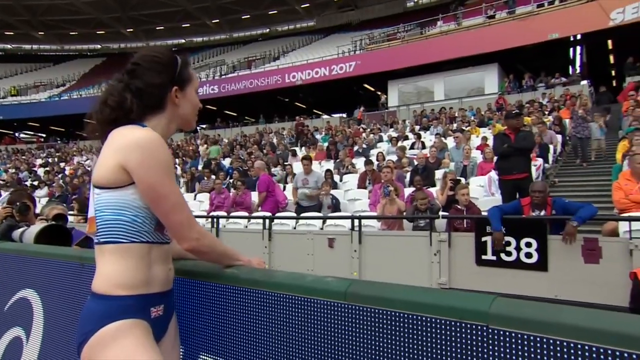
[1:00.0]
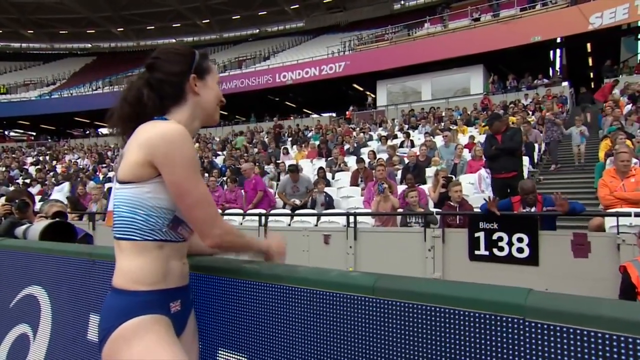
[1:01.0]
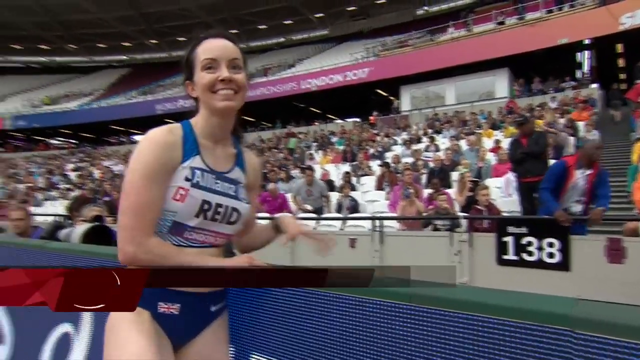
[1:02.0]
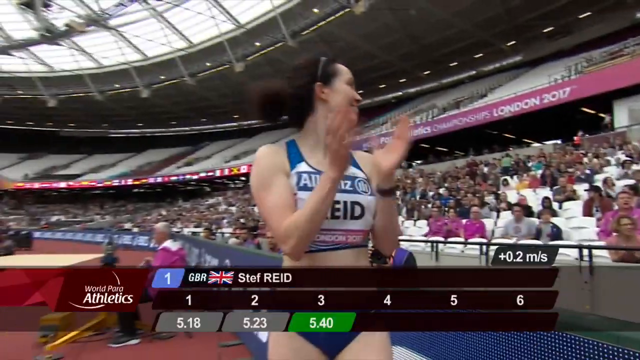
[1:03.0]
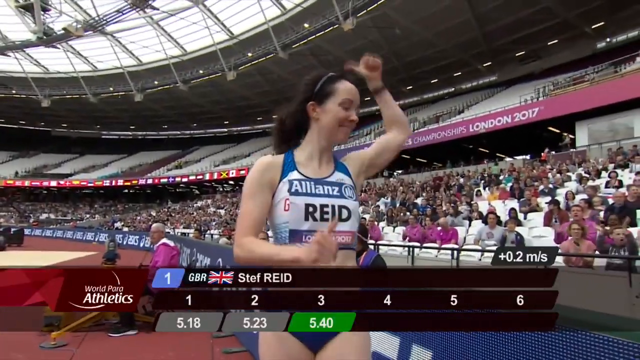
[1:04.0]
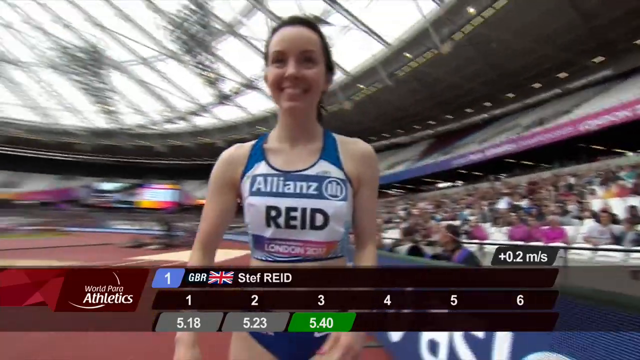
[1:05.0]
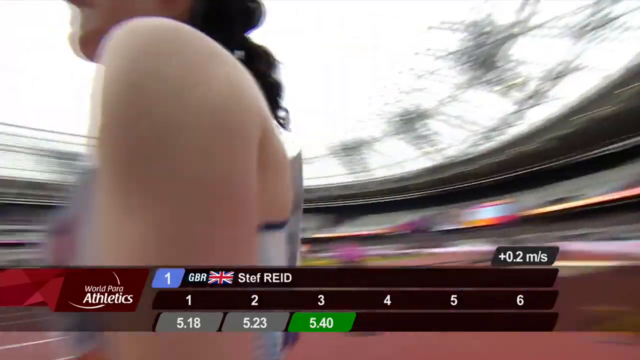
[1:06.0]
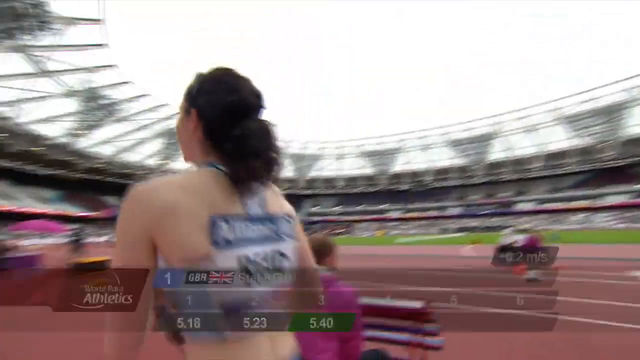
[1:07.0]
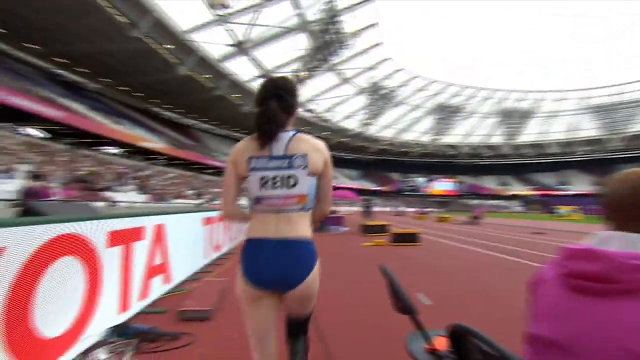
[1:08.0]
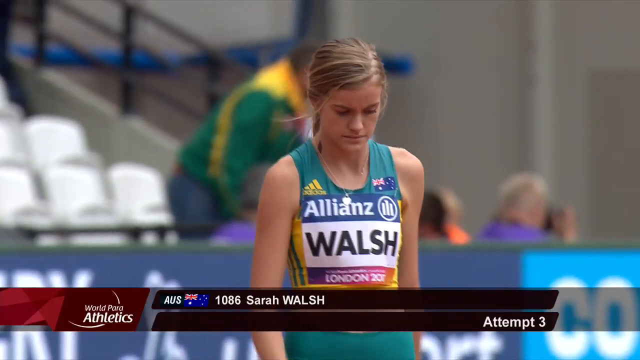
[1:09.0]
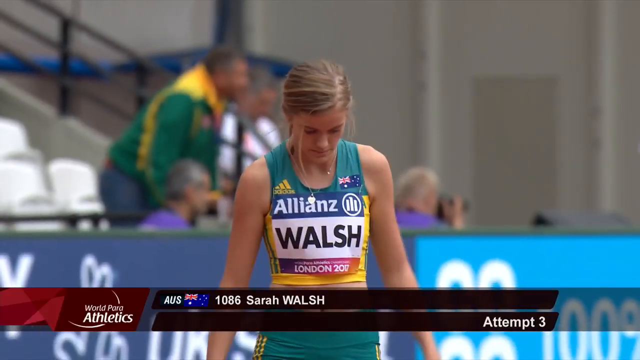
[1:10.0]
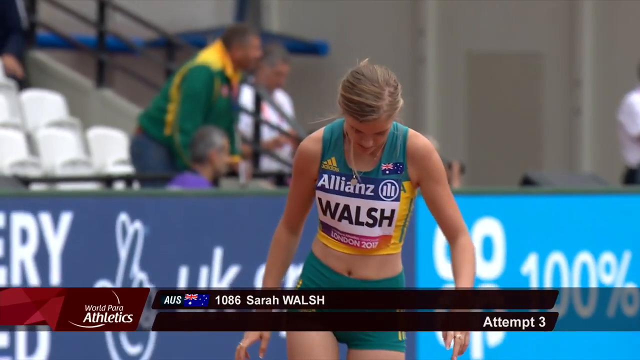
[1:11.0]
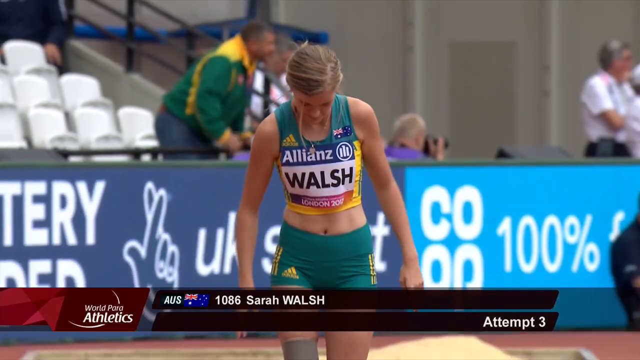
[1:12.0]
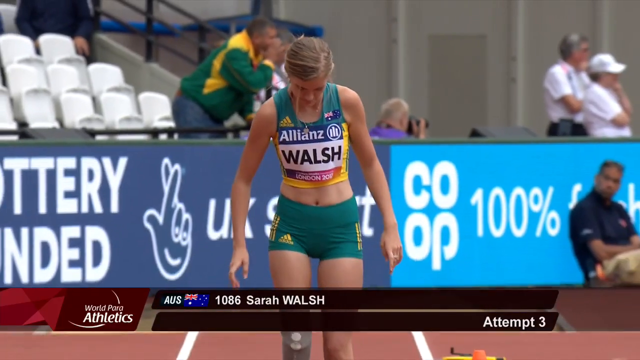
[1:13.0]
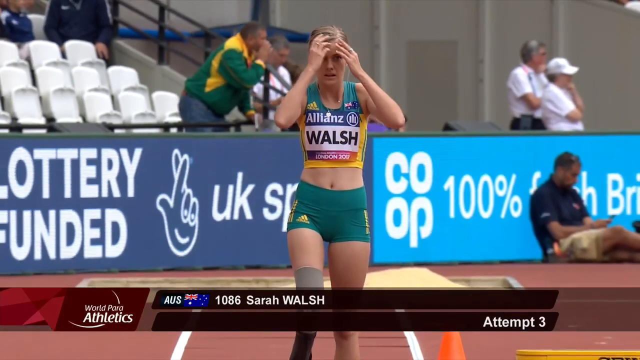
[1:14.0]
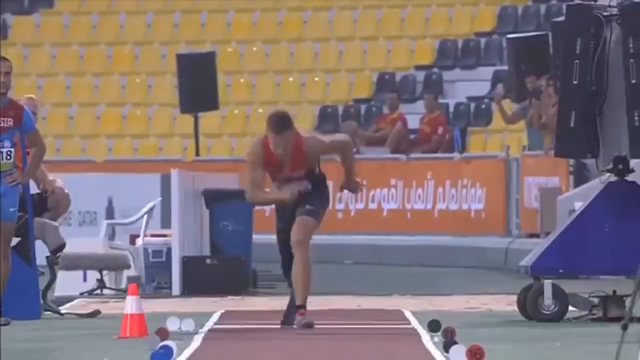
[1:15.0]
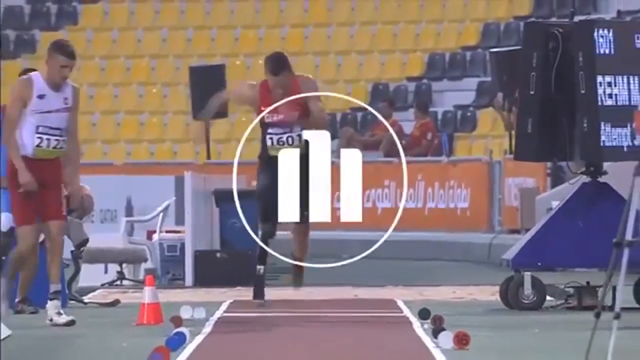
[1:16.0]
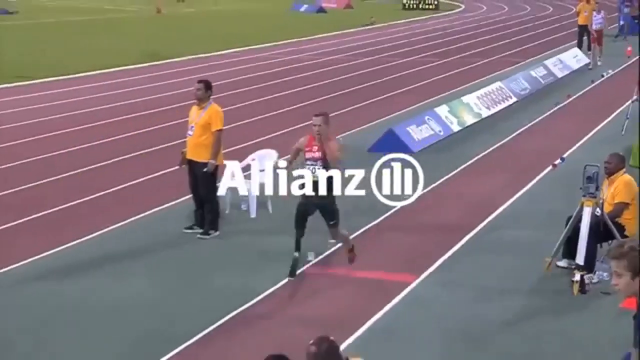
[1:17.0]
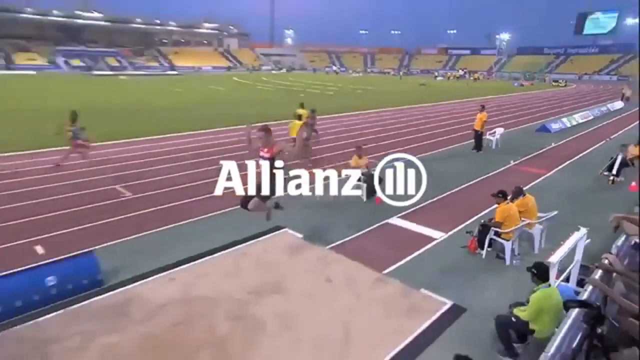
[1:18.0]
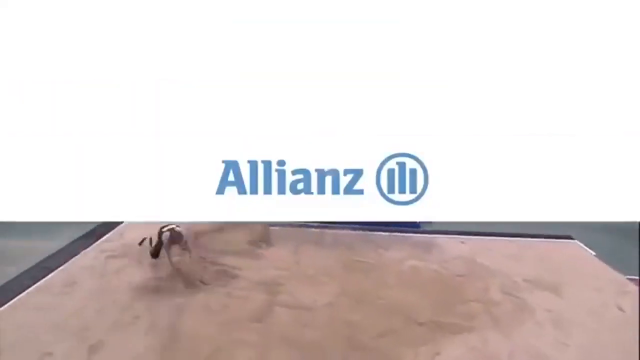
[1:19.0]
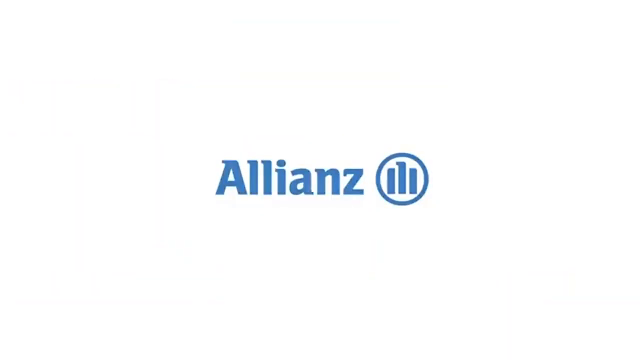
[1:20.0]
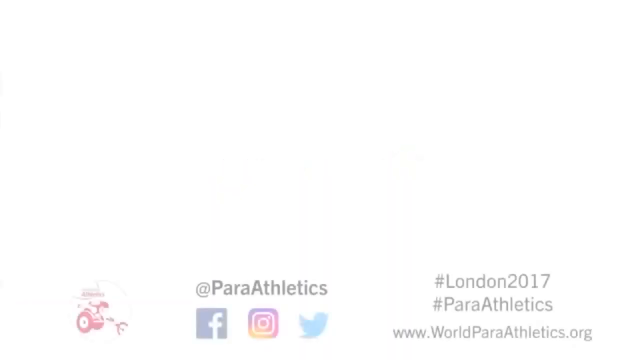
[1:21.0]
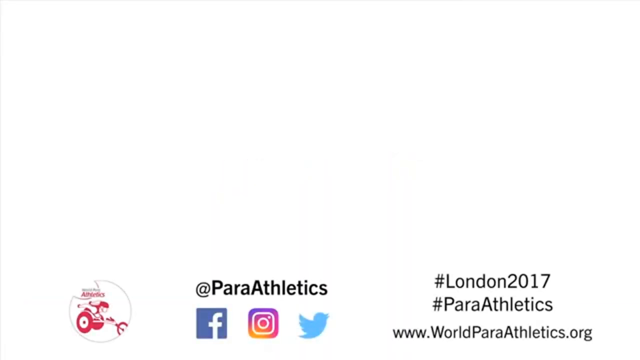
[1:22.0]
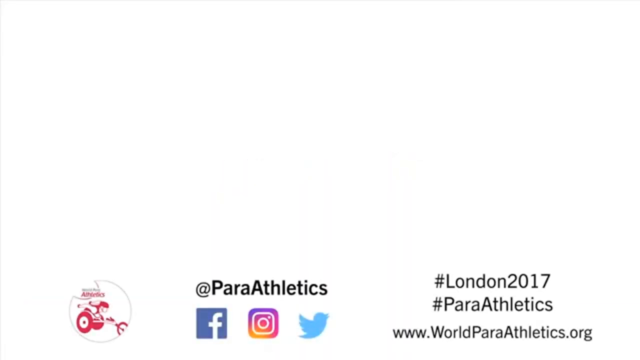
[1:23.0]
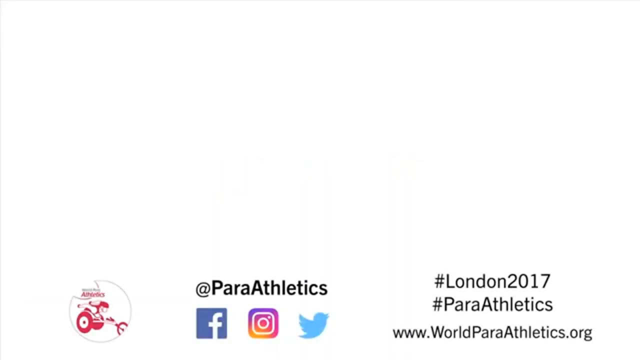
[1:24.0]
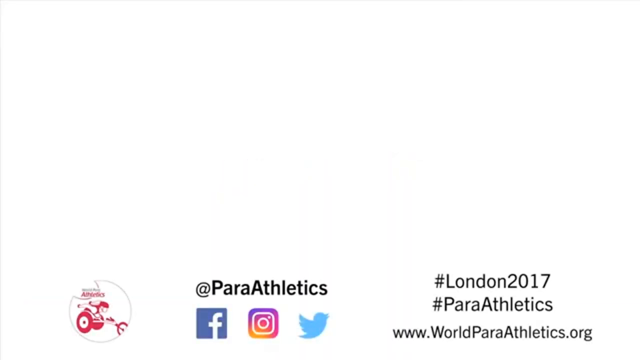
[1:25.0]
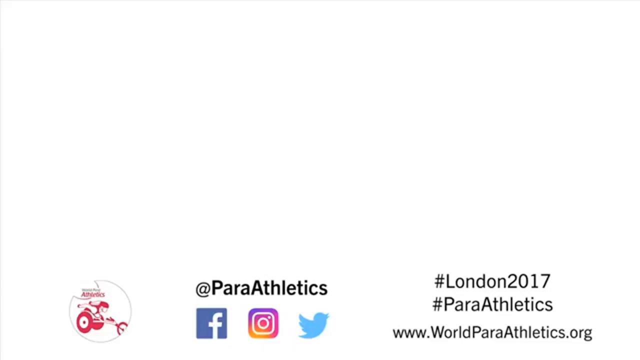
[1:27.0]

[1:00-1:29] A woman stands up against the barrier at the side of the track, looking over at the crowd and talking to someone there. She turns to face the camera and begins clapping, then holds her left hand up in the air and gives a thumbs up to the crowd. Next, a woman walks up to the starting block, standing on the starting line as if getting ready for her long jump run. Before her jump is shown, the video switches to a replay of a man running down the track as fast as he can; at the white line he jumps into the air and flies as far as he can before landing in the sand. At the end, hashtags and social media links for the Para-Athletics in London 2017 appear.